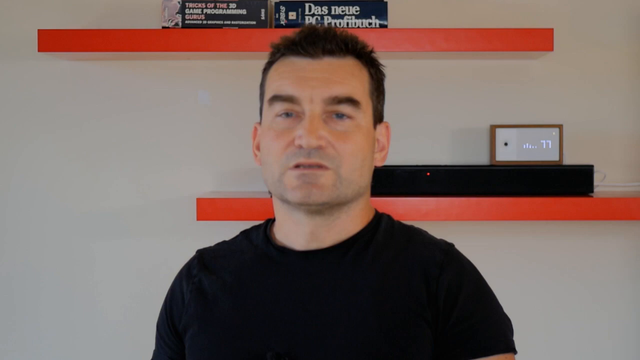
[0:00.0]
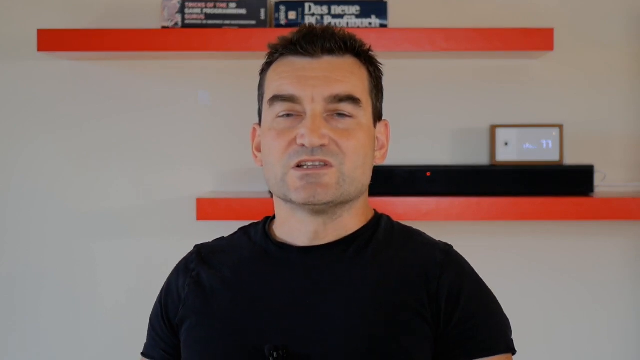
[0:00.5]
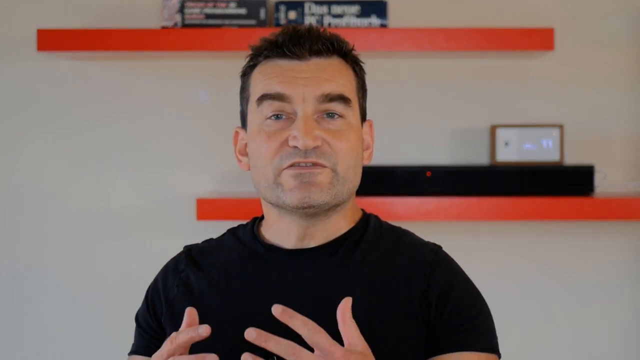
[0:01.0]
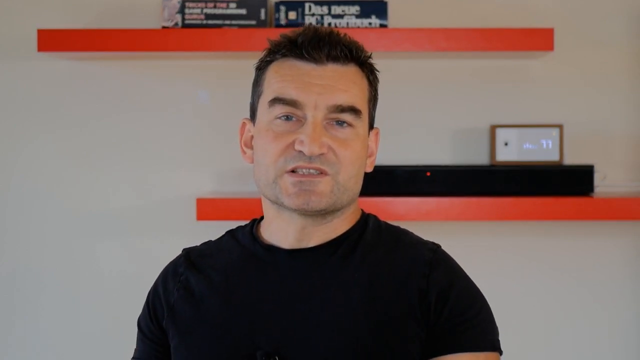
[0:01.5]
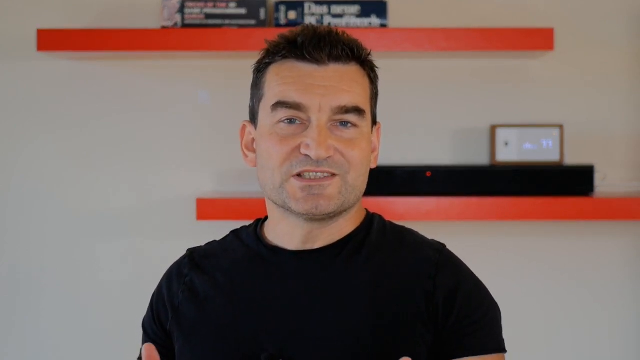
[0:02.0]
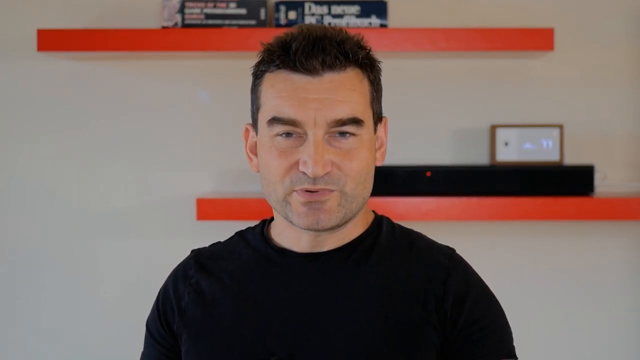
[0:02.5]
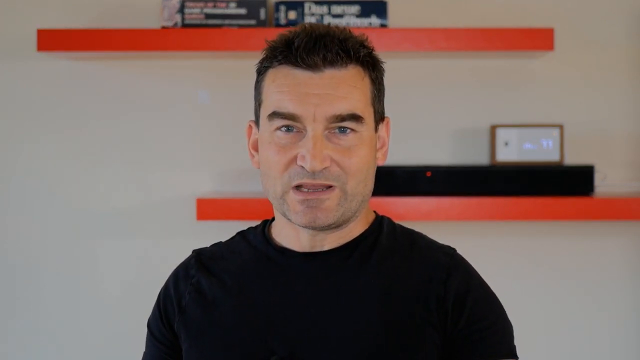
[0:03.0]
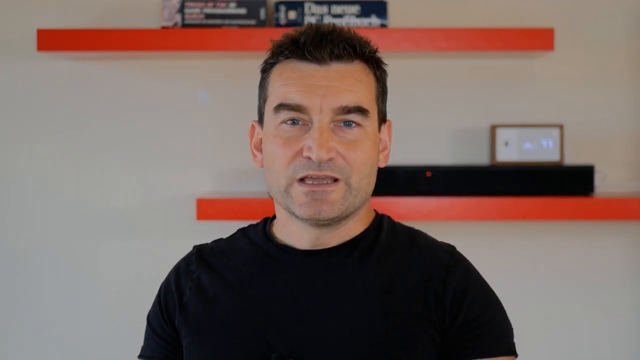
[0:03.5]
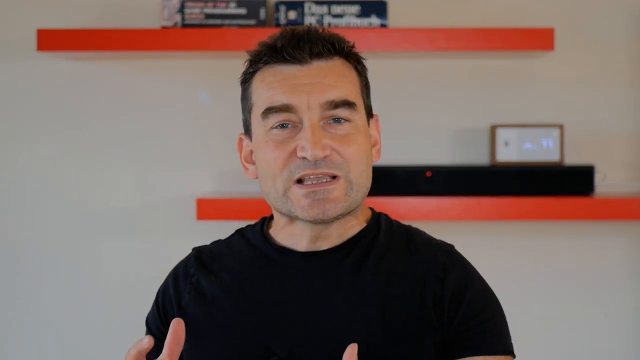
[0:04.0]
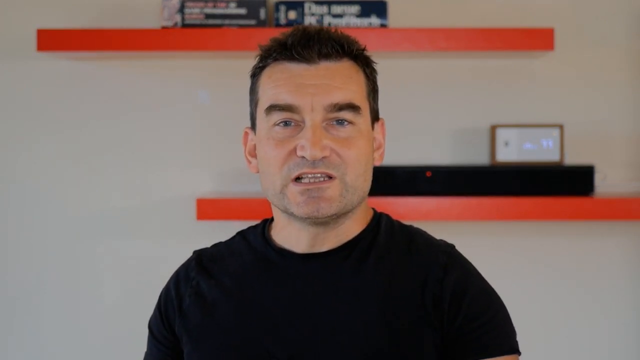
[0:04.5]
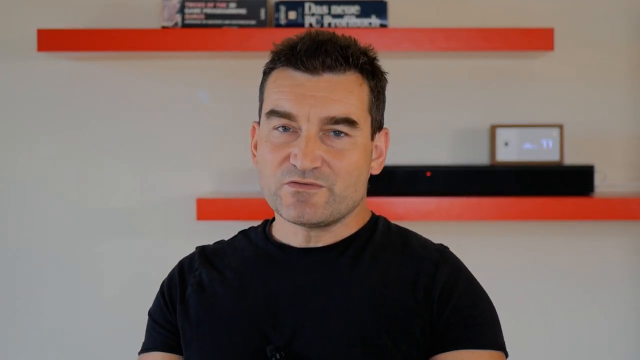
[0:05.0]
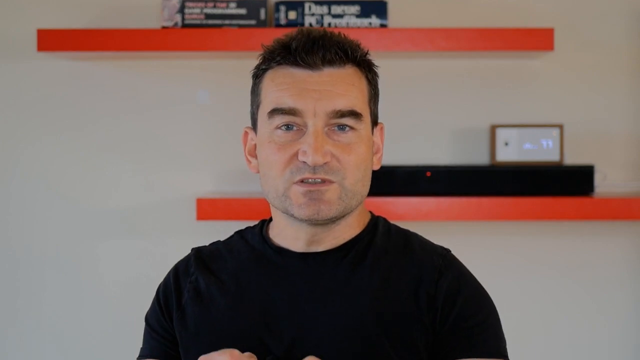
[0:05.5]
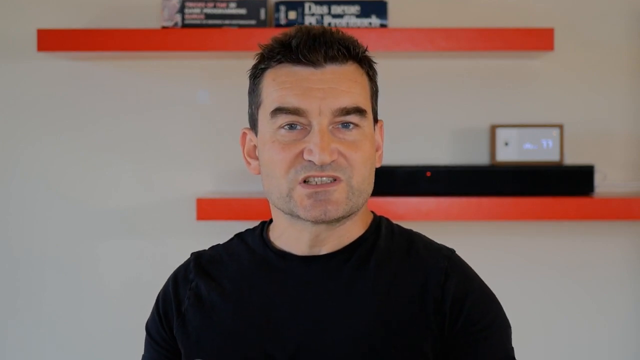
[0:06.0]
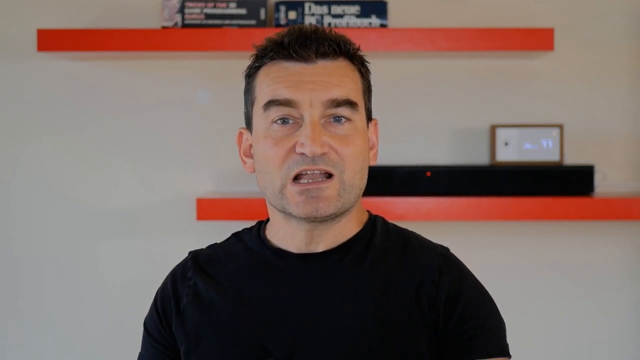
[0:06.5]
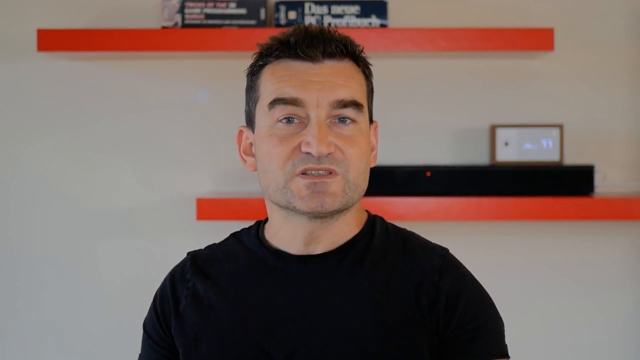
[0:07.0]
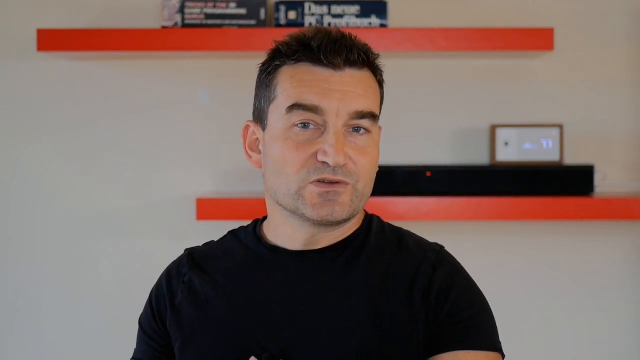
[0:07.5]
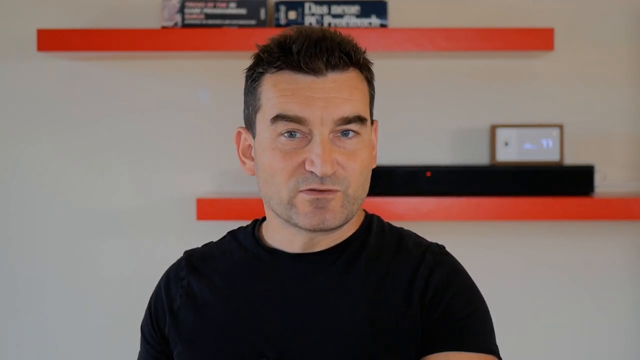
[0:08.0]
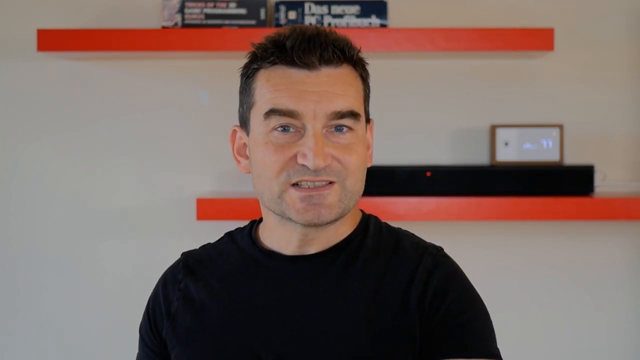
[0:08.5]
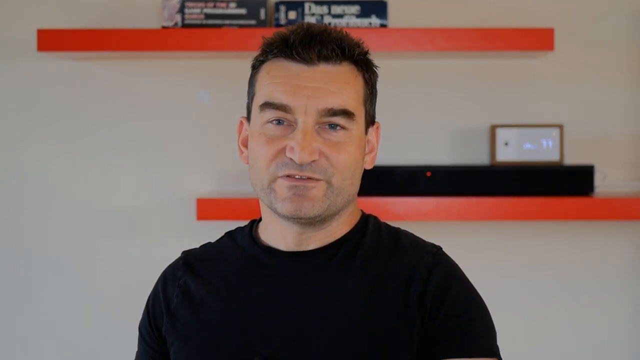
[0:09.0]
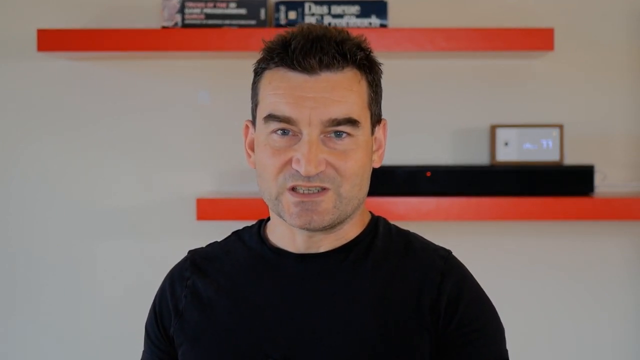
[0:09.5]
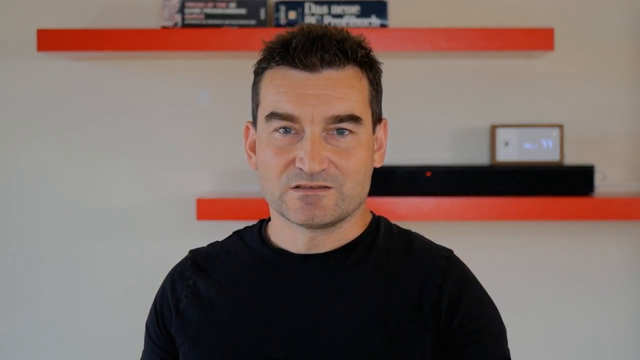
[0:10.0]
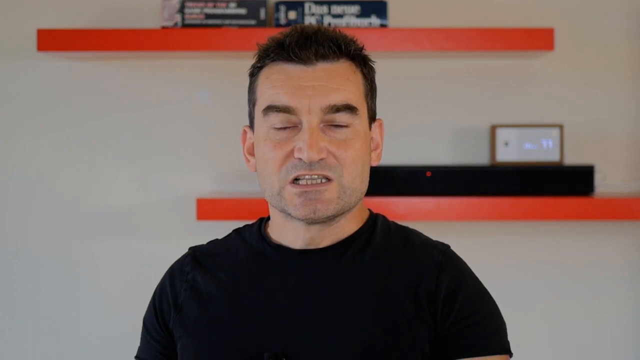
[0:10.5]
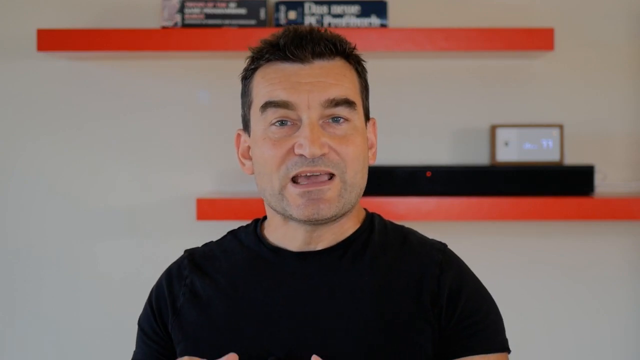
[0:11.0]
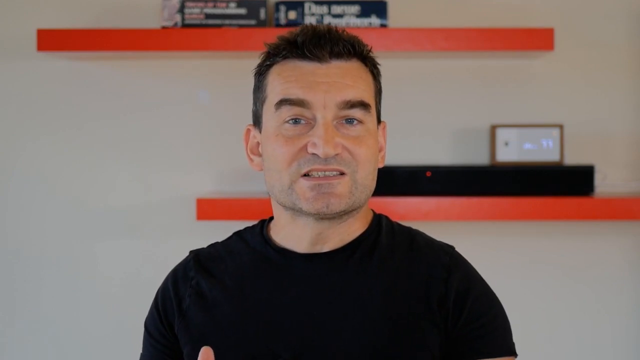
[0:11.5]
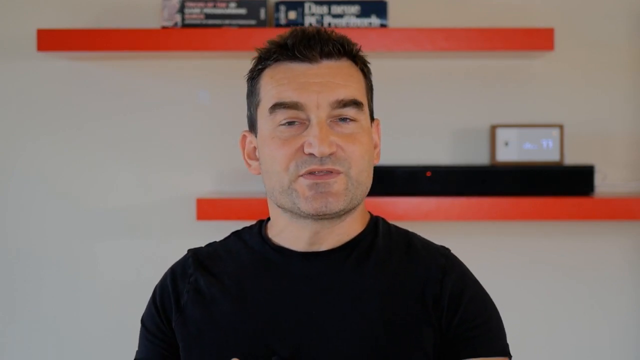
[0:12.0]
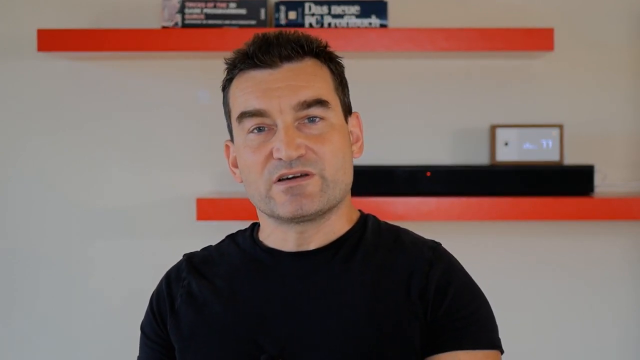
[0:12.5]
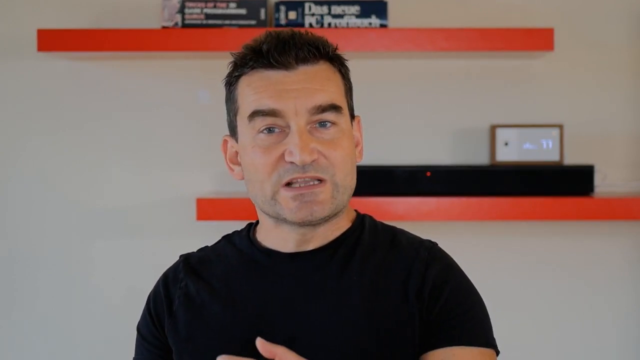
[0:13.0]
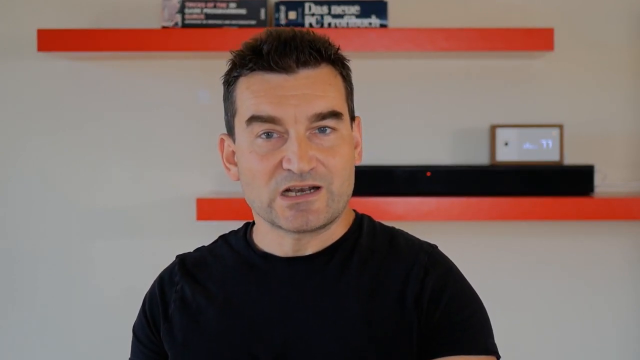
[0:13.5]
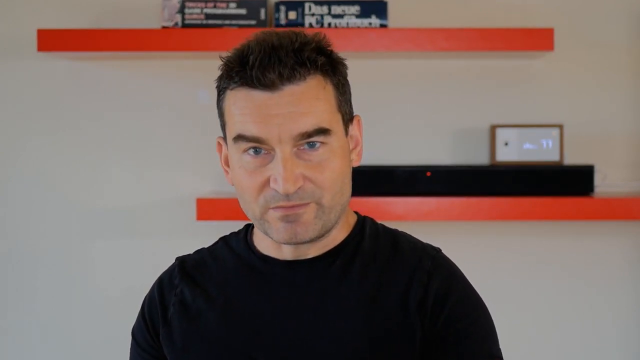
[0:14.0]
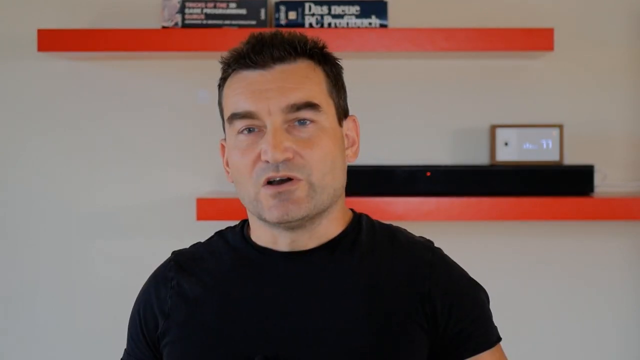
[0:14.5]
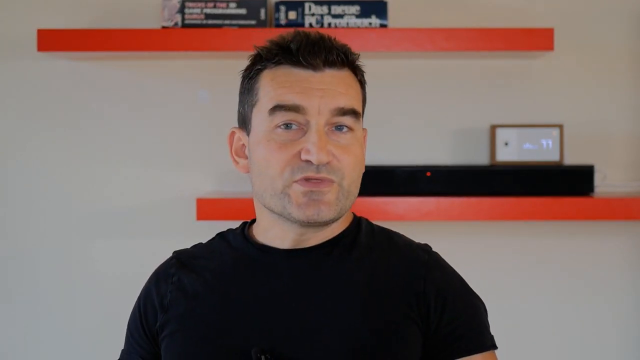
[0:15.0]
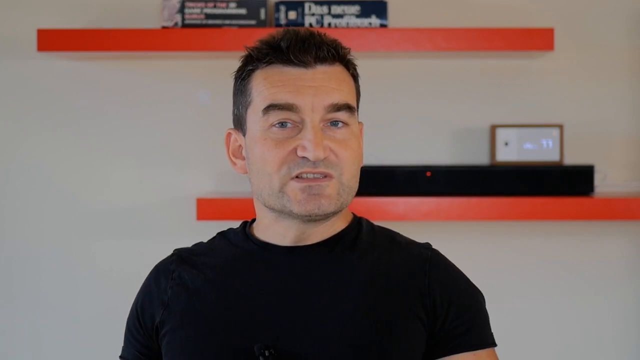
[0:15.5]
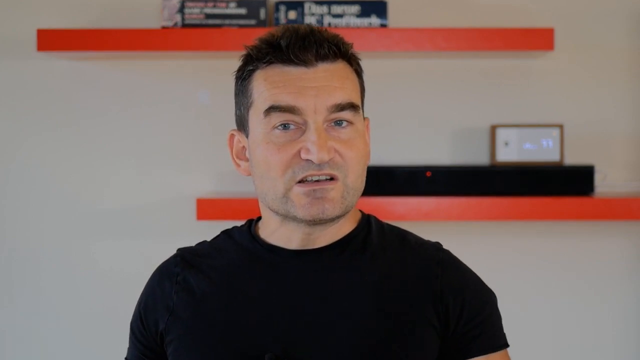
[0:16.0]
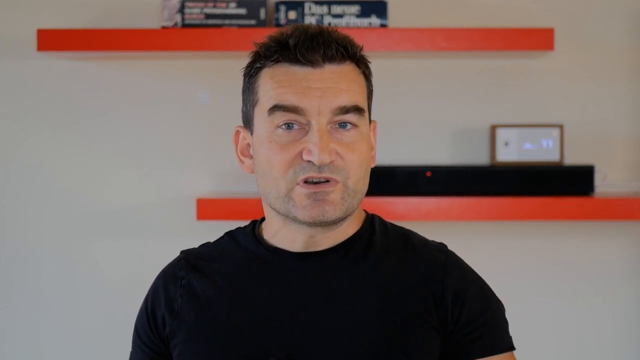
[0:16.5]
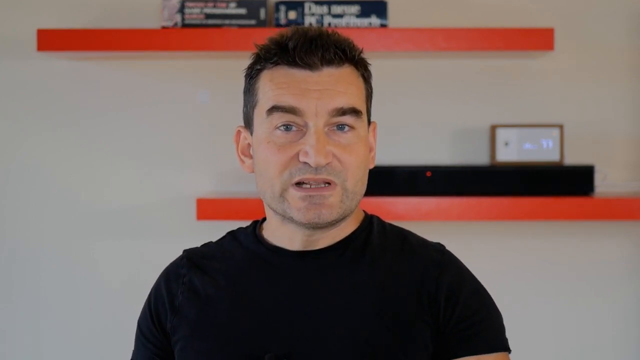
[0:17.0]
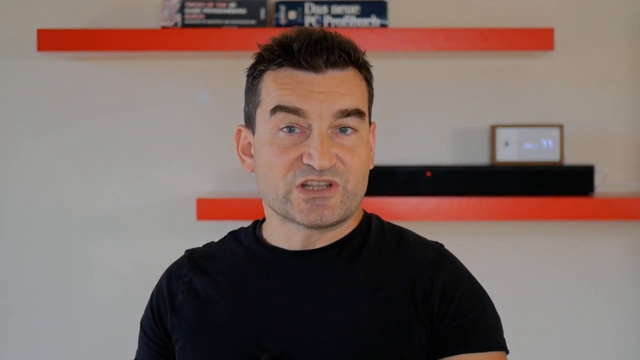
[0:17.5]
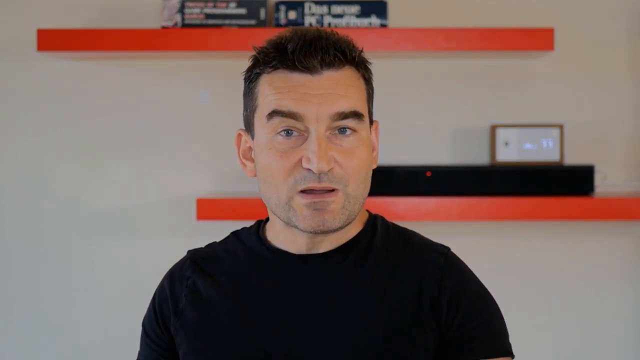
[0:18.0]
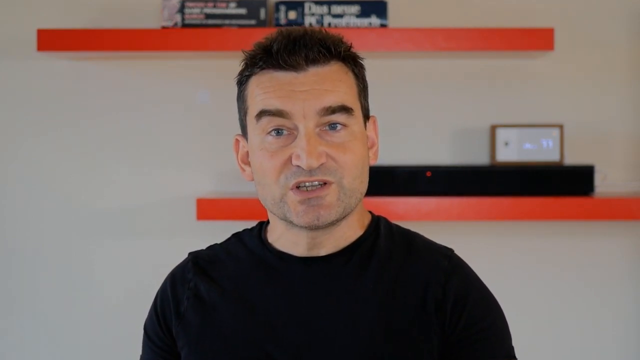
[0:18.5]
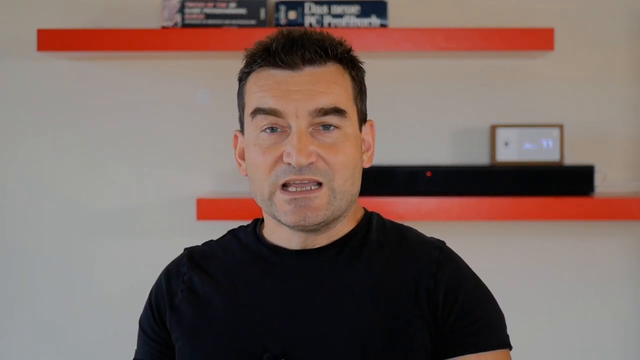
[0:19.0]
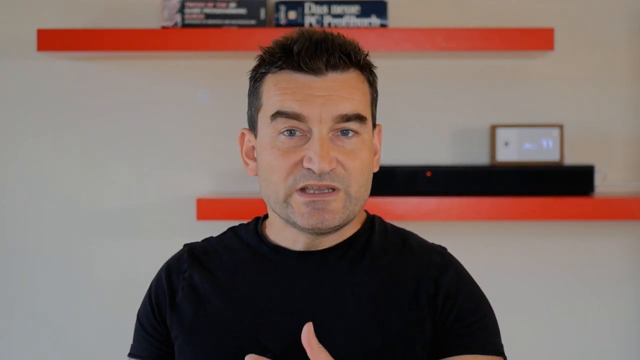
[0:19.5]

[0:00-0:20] A man speaks while looking into the camera. He is a white man with black hair and bushy eyebrows, wearing a black sweater, and he looks like he has a five o'clock shadow, as if he hasn't shaved today. Behind him on the wall are orange shelves that look very contemporary. On the lower shelf there is a monitor and a box that almost looks like a clock of some sort, apparently showing the date. Above him, on the upper shelf, are some books. The wall is beige. As he continues to talk, he sometimes cocks his head a little to the left and a little to the right and occasionally lowers his chin. The tips of his hands are visible, and he sometimes talks with his hands.